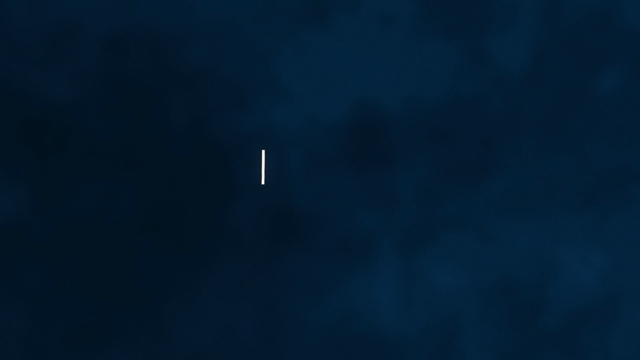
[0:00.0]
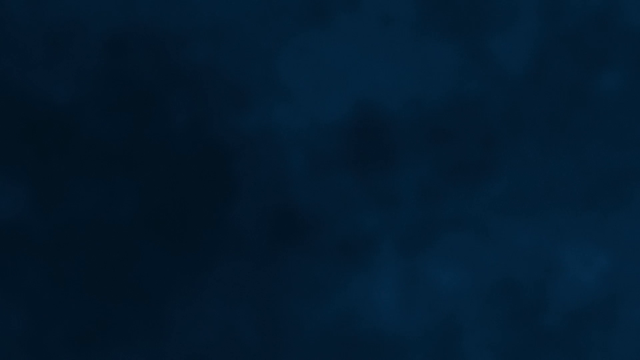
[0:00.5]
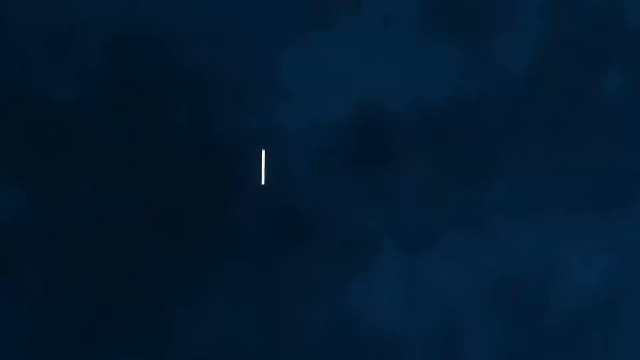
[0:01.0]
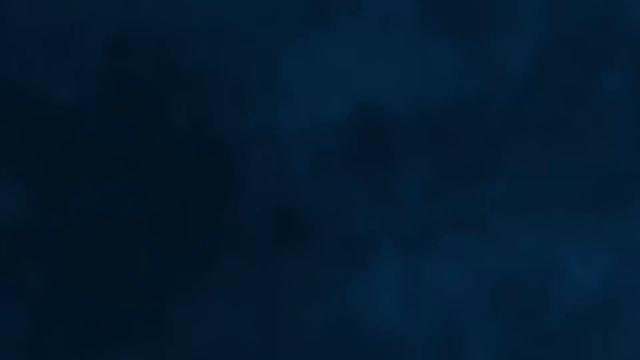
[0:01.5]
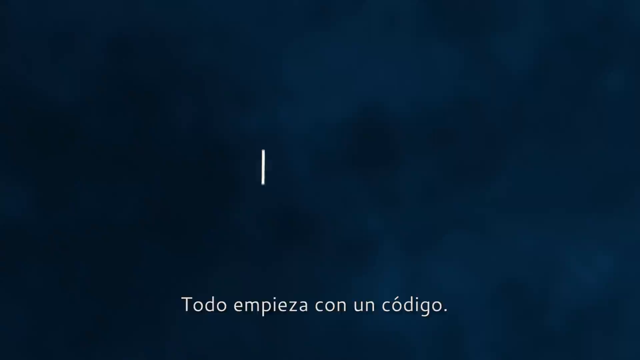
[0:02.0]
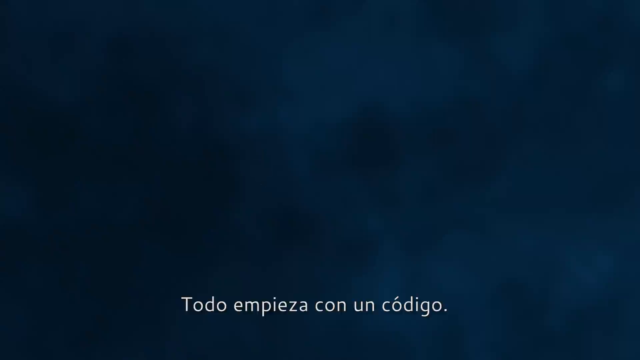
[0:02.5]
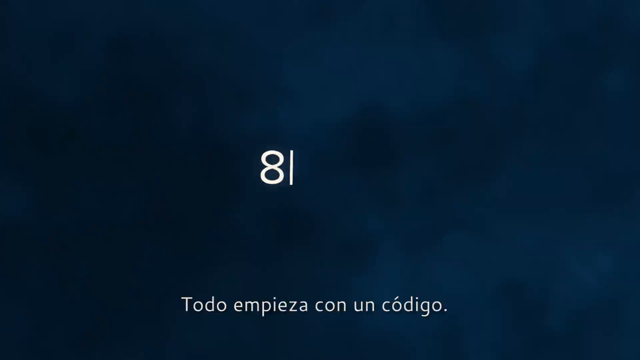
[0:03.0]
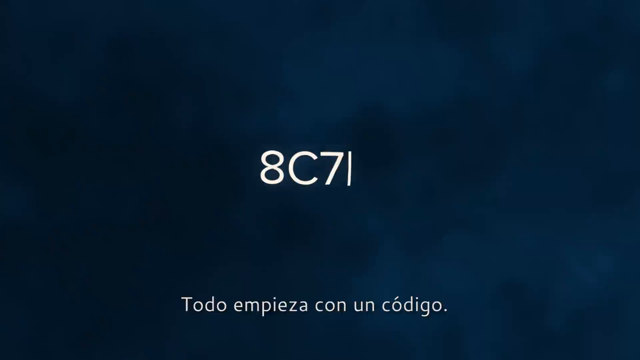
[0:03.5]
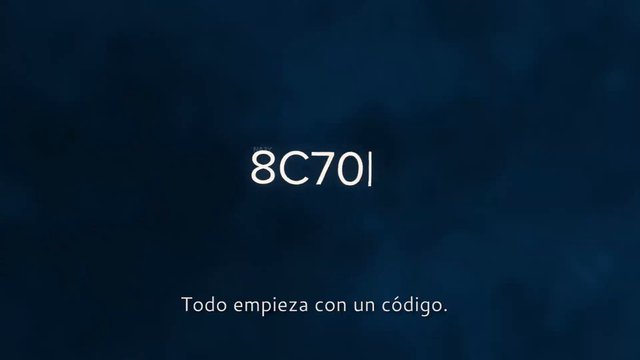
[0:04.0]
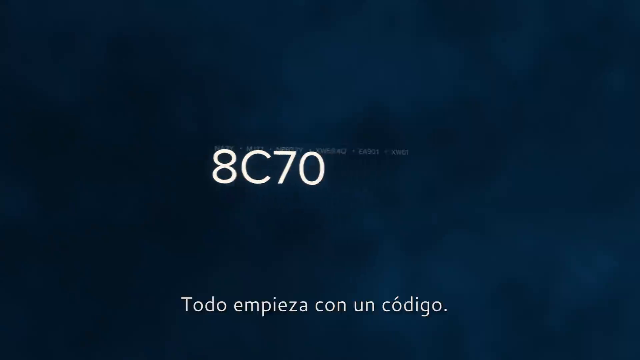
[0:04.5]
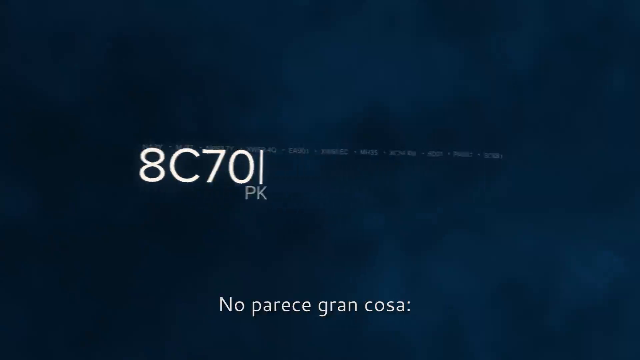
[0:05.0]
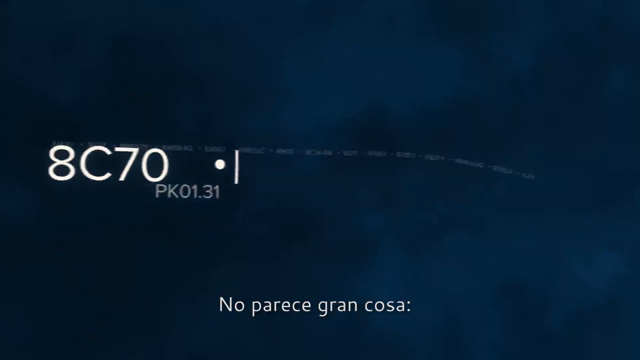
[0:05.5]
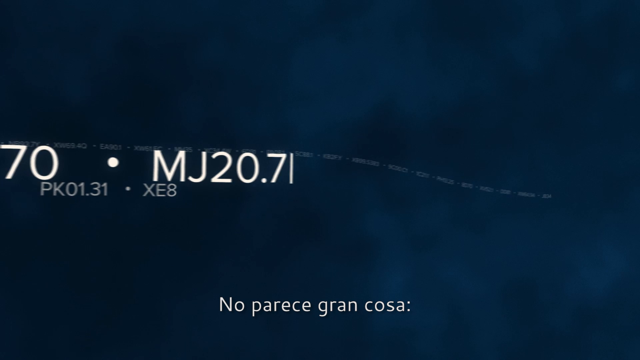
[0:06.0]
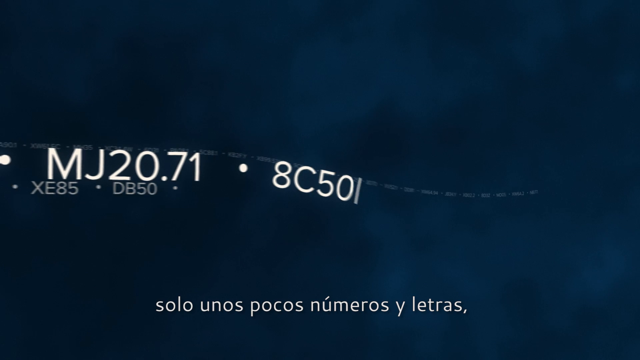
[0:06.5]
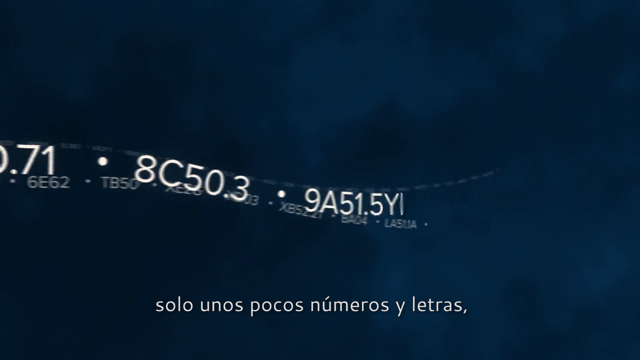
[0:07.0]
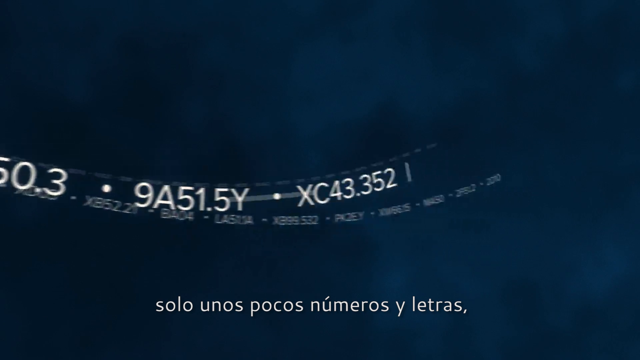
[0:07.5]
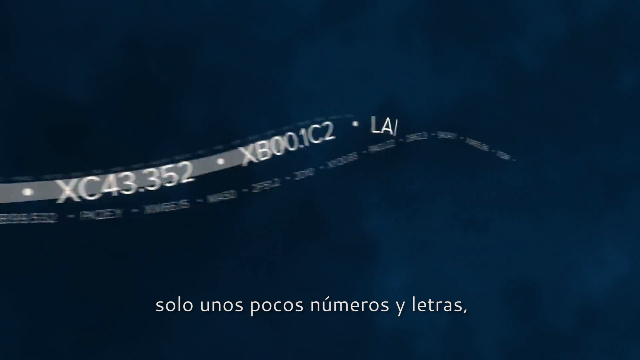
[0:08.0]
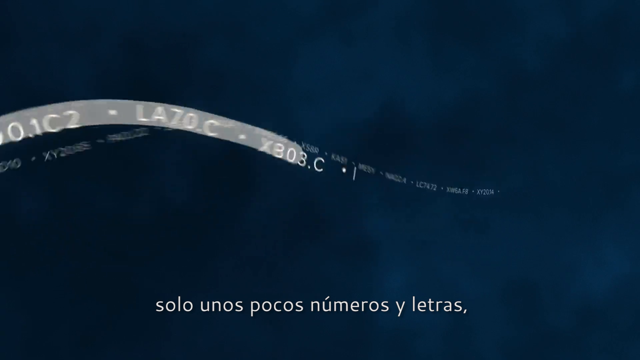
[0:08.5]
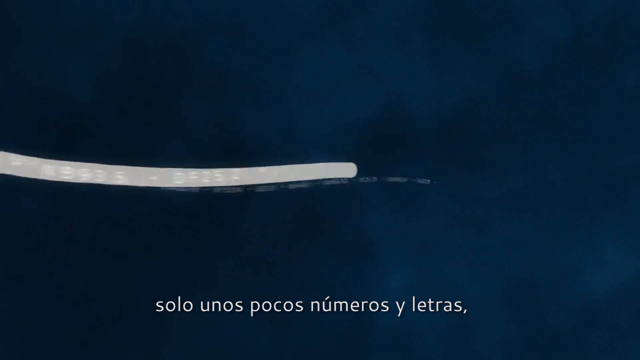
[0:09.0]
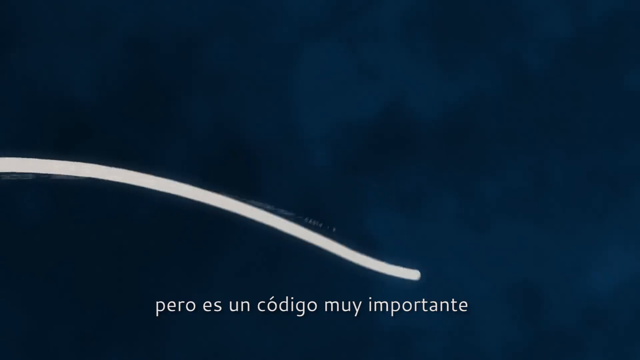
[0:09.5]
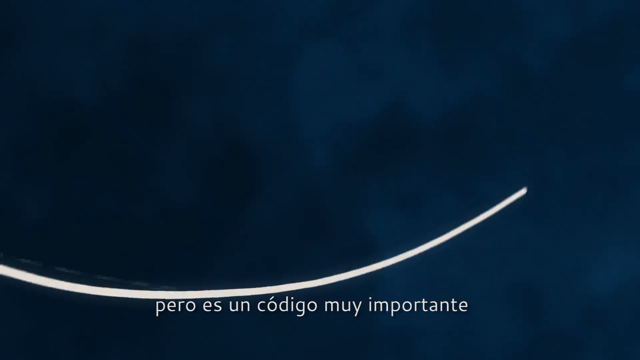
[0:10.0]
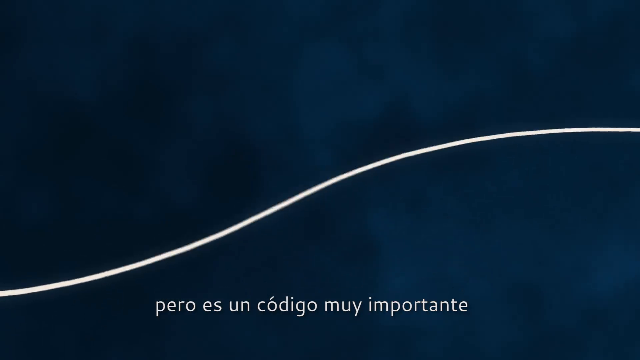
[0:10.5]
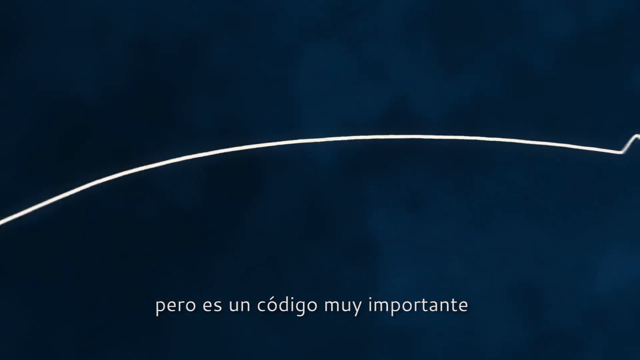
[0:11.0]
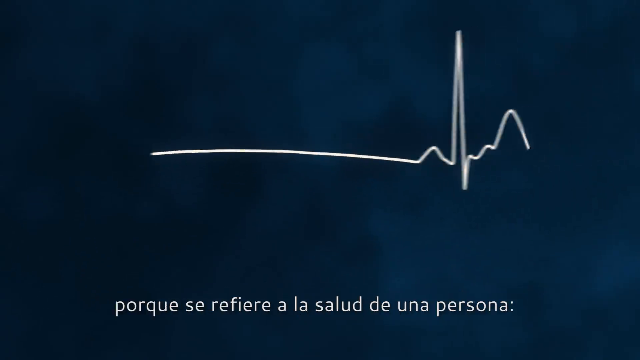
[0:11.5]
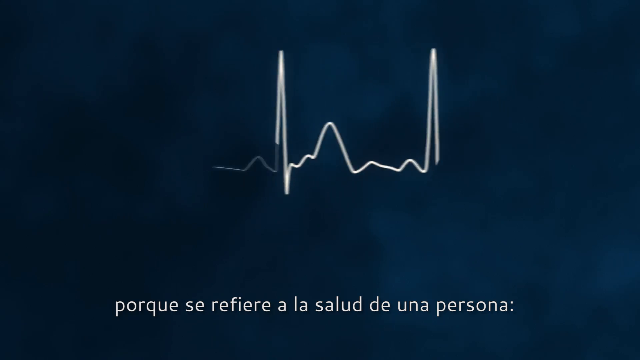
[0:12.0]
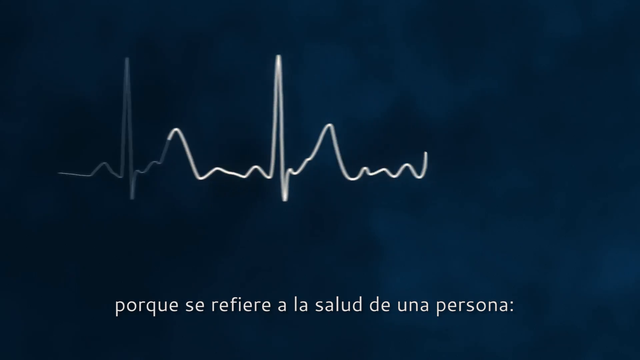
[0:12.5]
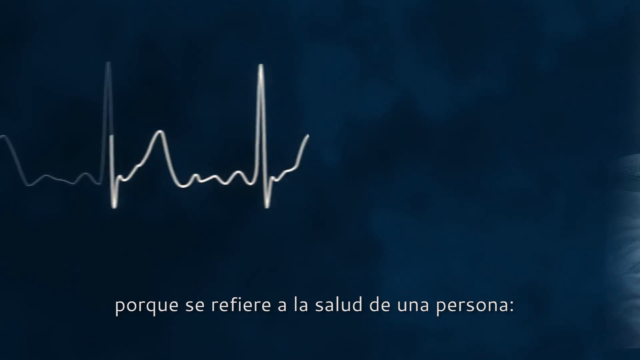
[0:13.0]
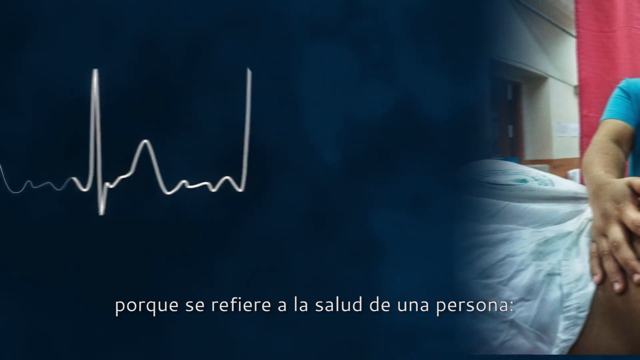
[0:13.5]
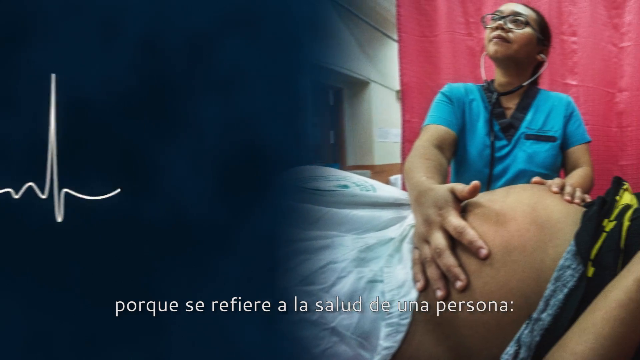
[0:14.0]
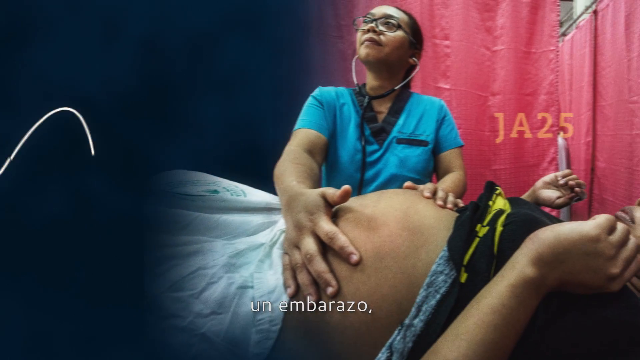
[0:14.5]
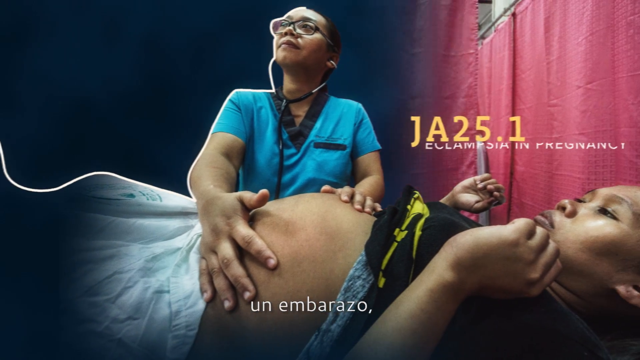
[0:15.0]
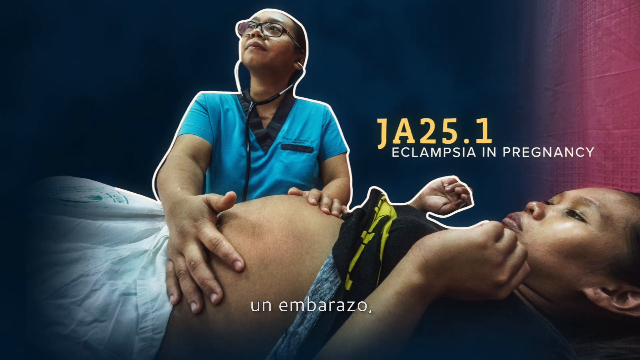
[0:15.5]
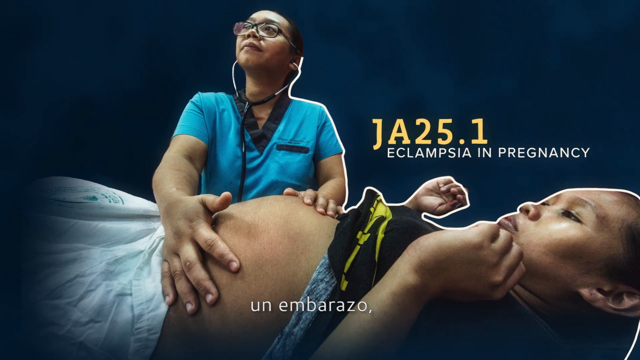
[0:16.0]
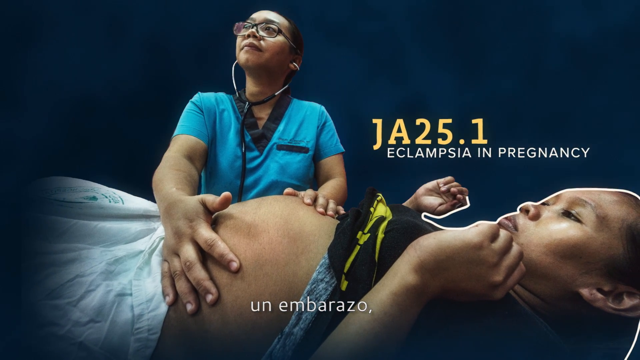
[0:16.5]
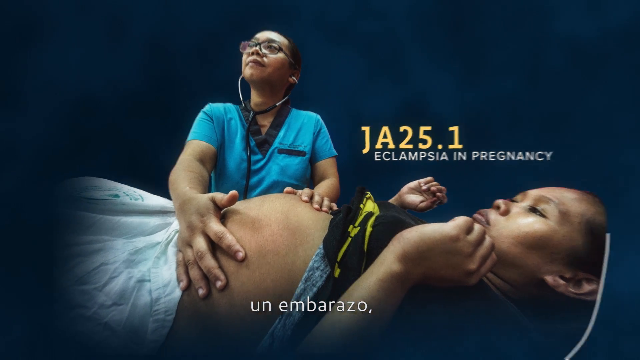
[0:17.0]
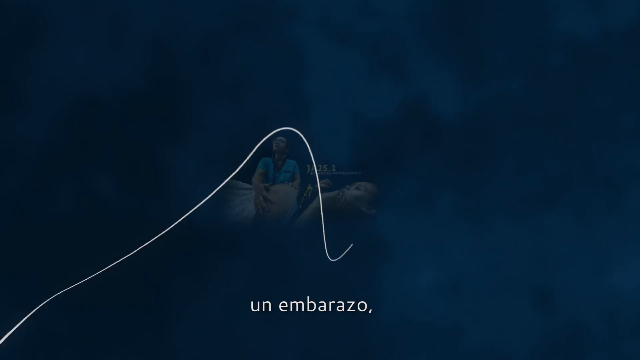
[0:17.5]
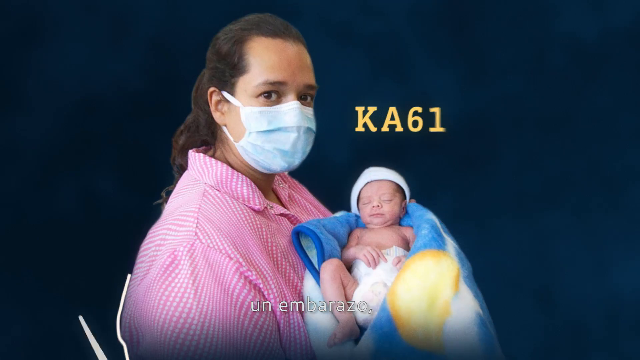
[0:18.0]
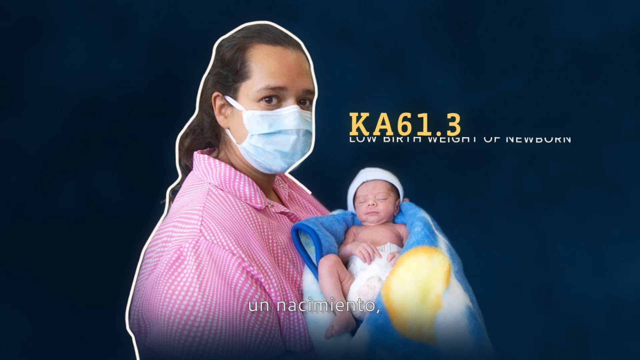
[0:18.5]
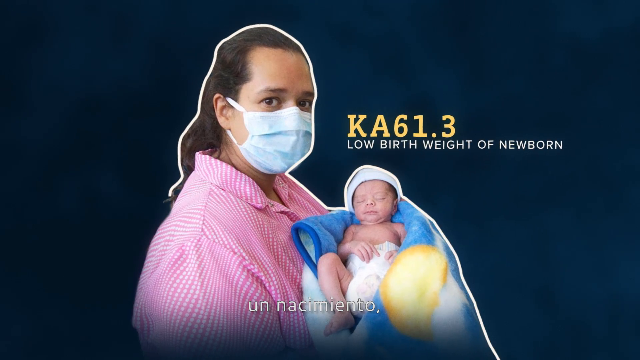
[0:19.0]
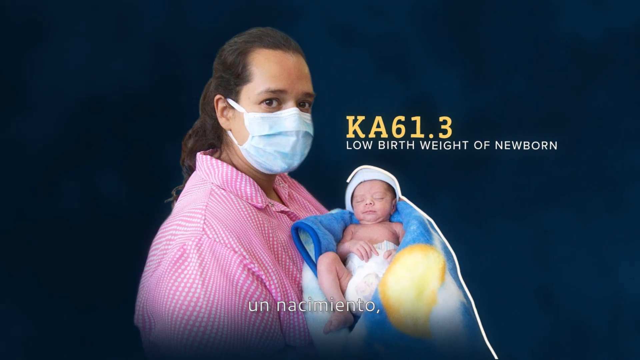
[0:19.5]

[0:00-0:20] The video opens on a navy blue, somewhat cloudy background with something almost like a flashing typing cursor. Text reading "8C70" appears, followed by lots of numbers flowing along in a little timeline. The graphic is a moving line that flows quickly along the screen and then morphs into the shape of a heartbeat. Two women appear: one is lying on a bed, and the other, who looks like a nurse, wears a stethoscope and examines the first woman's belly. The on-screen text reads "JA25.1, eclampsia in pregnancy." The scene changes to another woman, and the text reads "KA61.3, low birth weight of newborn." The same white line now outlines this woman holding her newborn baby.